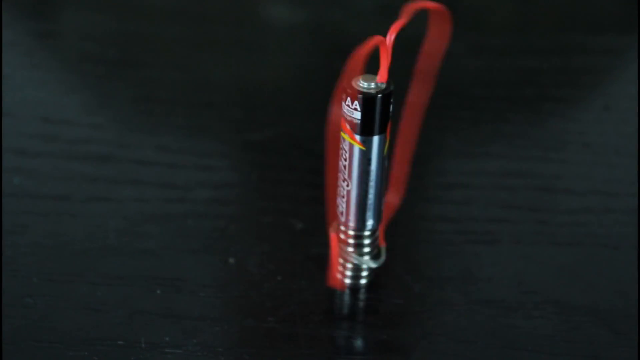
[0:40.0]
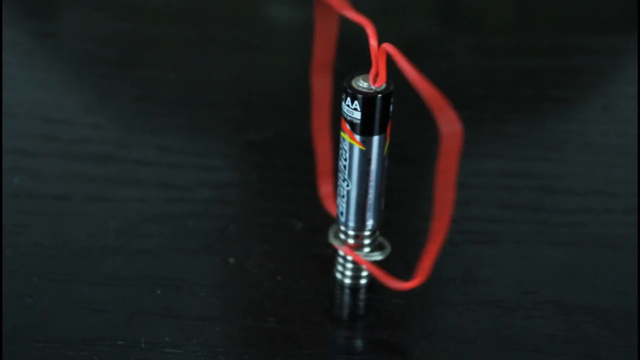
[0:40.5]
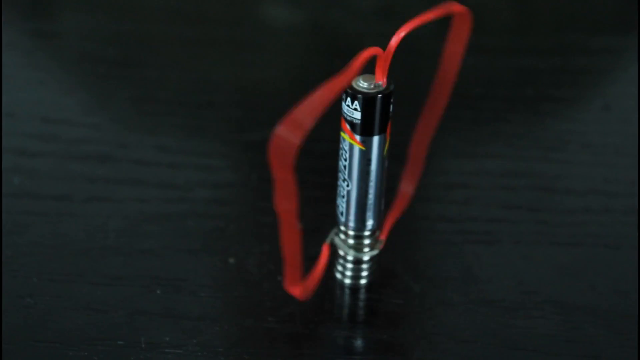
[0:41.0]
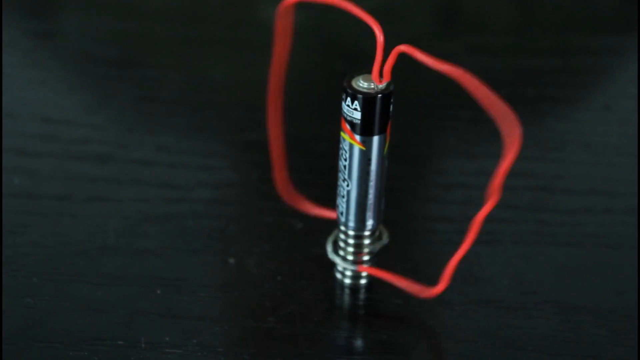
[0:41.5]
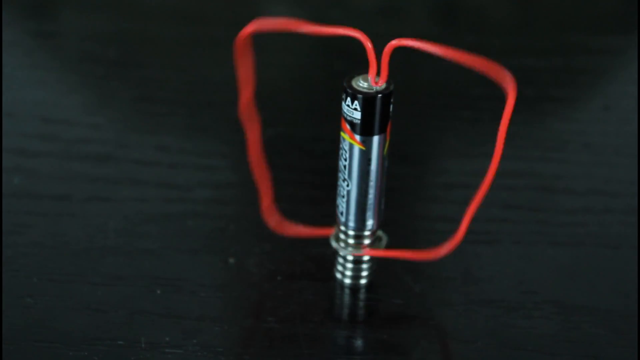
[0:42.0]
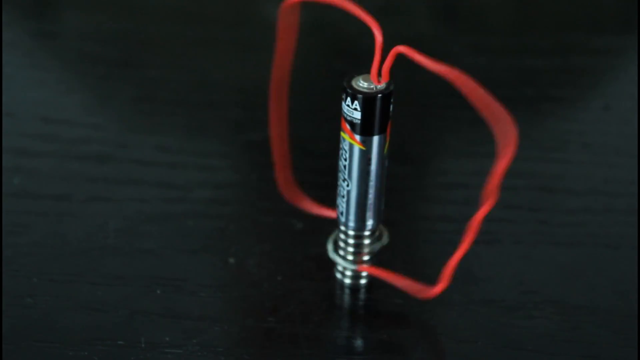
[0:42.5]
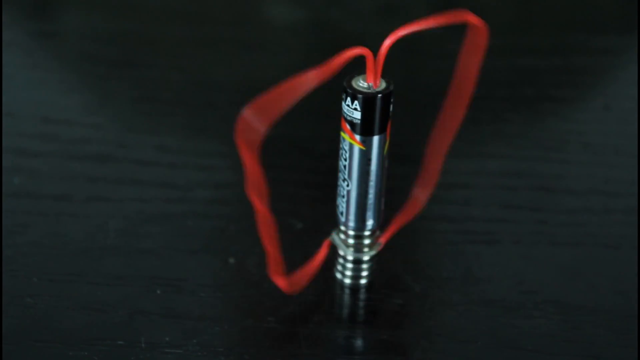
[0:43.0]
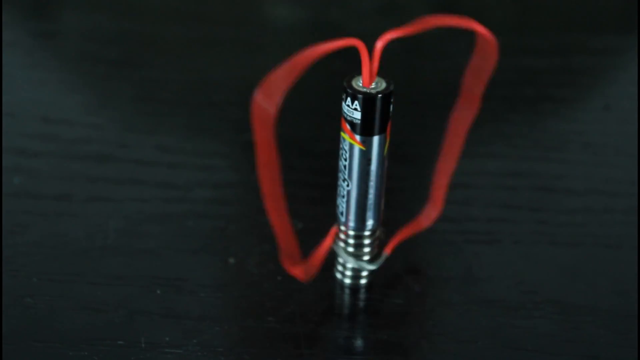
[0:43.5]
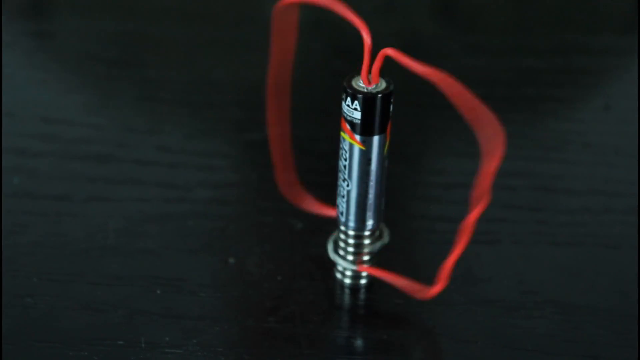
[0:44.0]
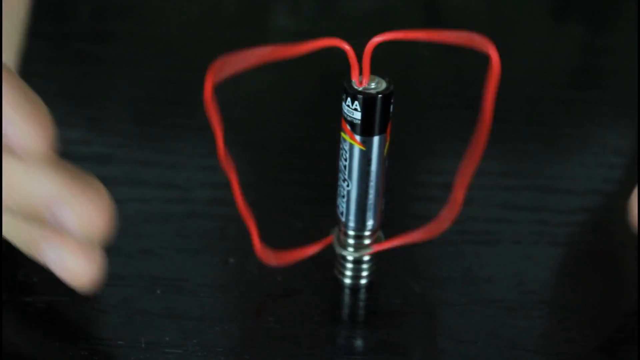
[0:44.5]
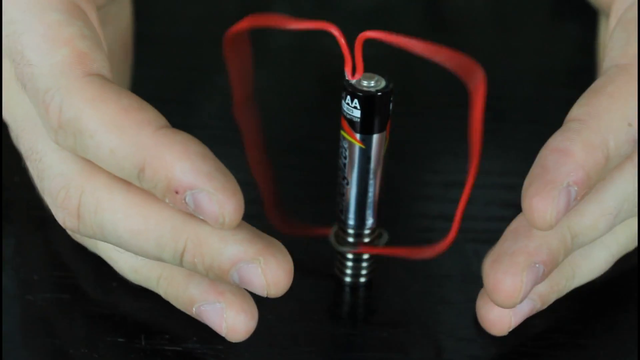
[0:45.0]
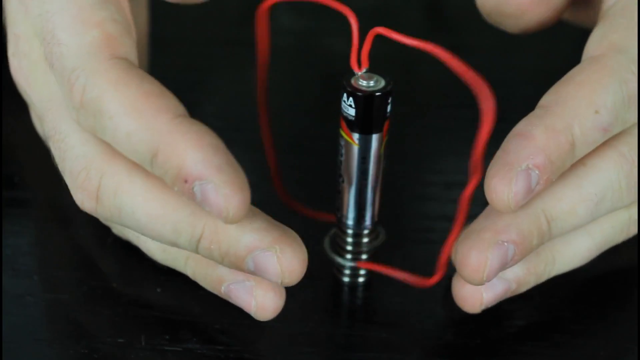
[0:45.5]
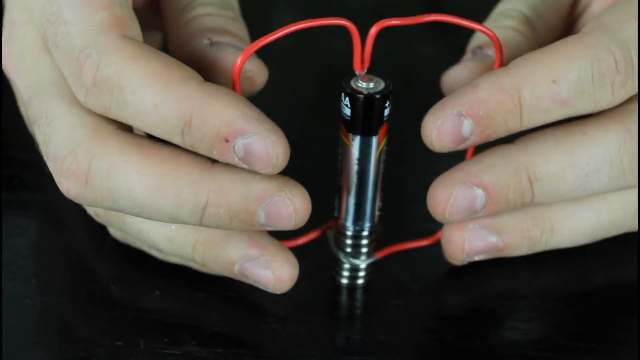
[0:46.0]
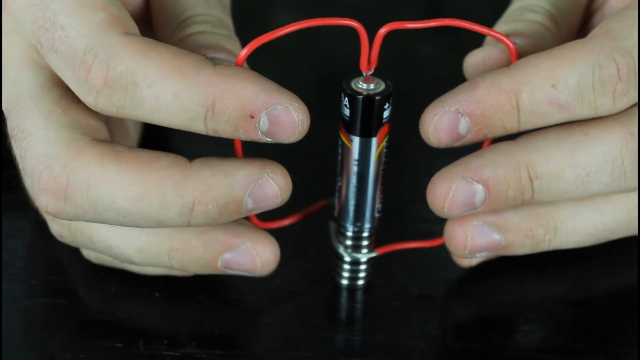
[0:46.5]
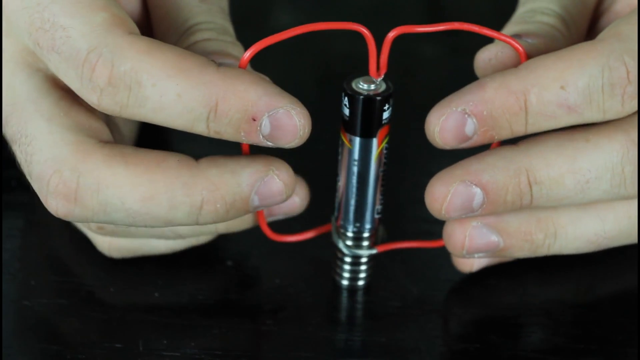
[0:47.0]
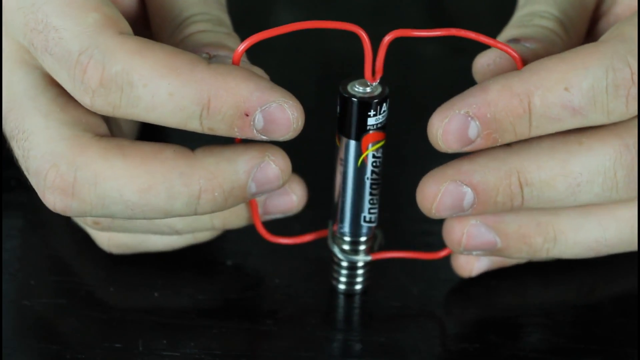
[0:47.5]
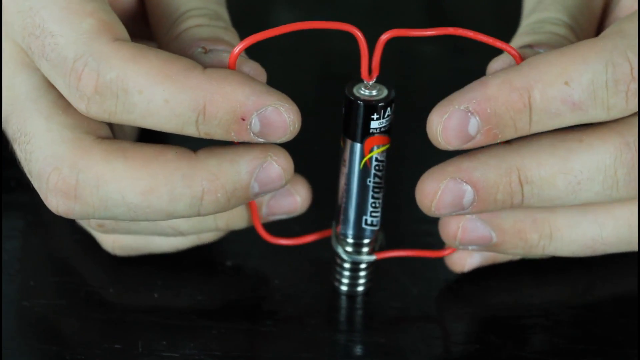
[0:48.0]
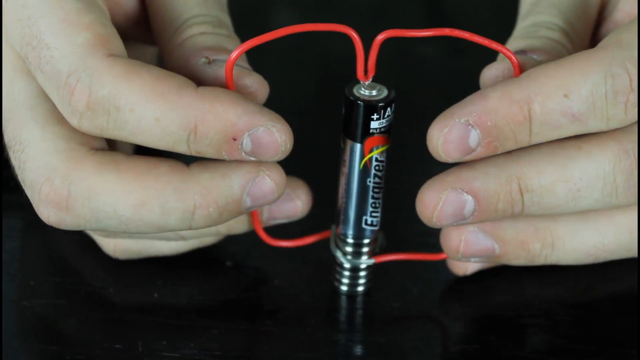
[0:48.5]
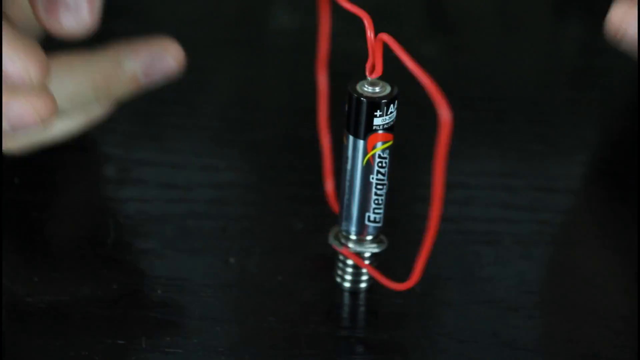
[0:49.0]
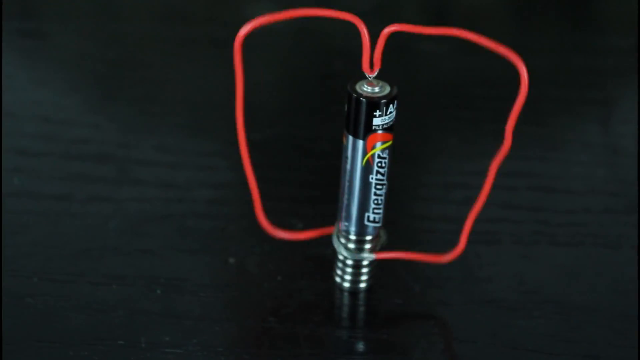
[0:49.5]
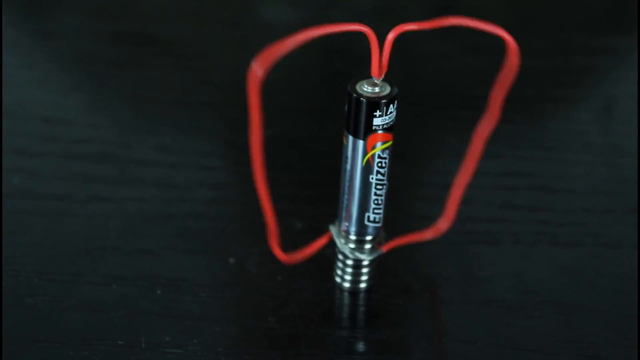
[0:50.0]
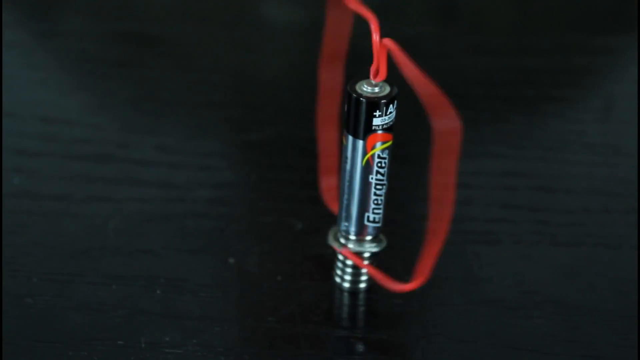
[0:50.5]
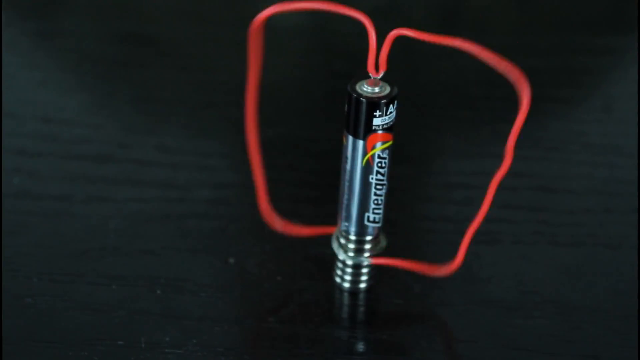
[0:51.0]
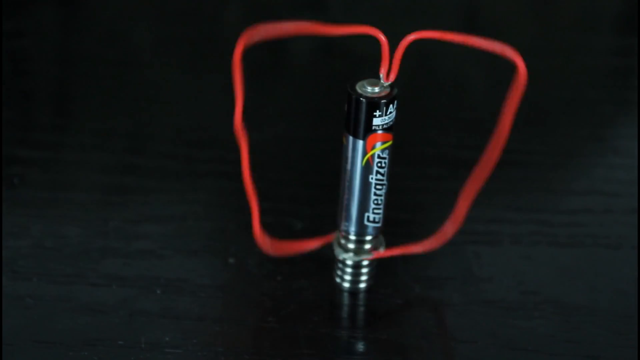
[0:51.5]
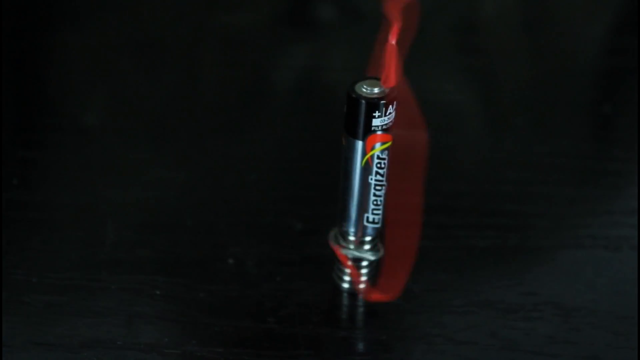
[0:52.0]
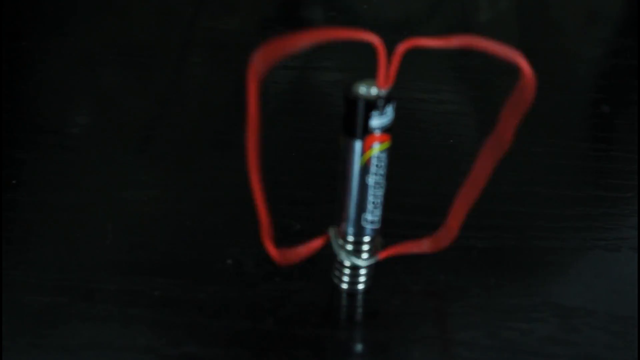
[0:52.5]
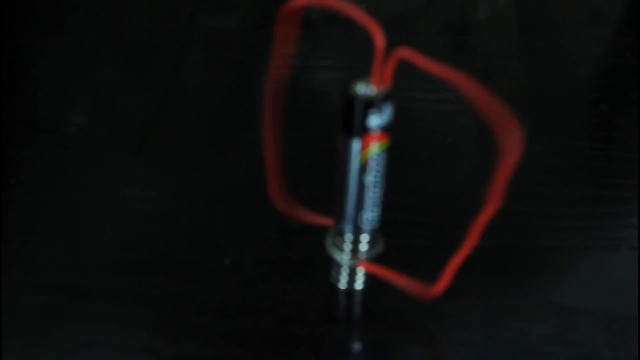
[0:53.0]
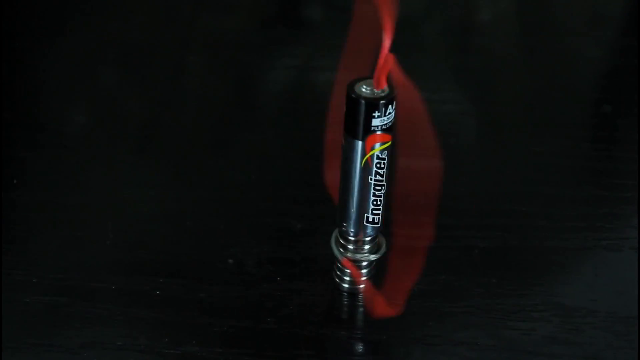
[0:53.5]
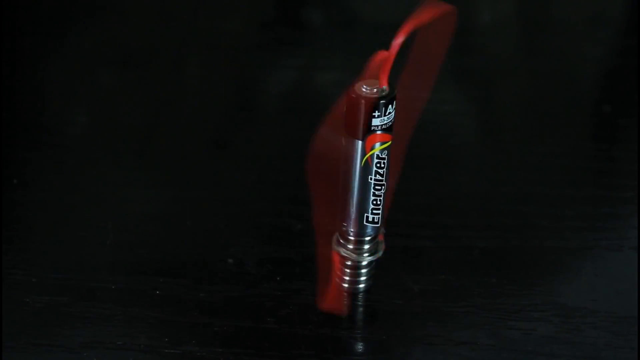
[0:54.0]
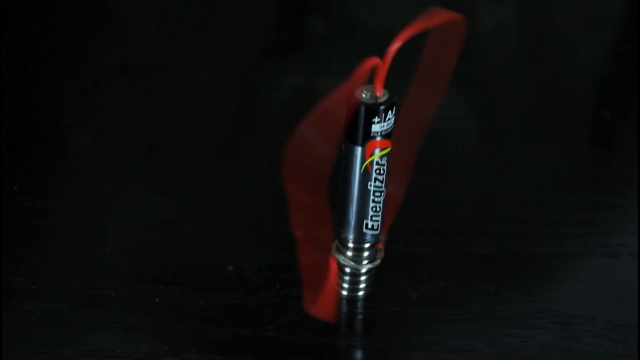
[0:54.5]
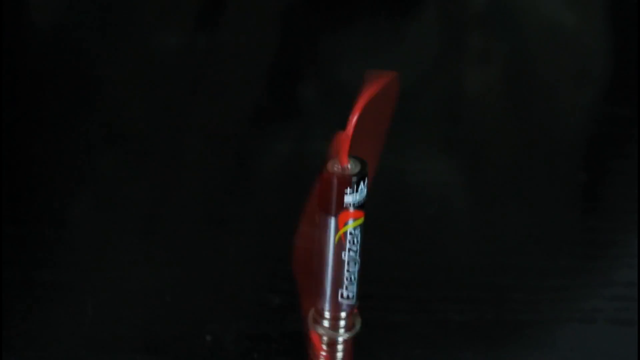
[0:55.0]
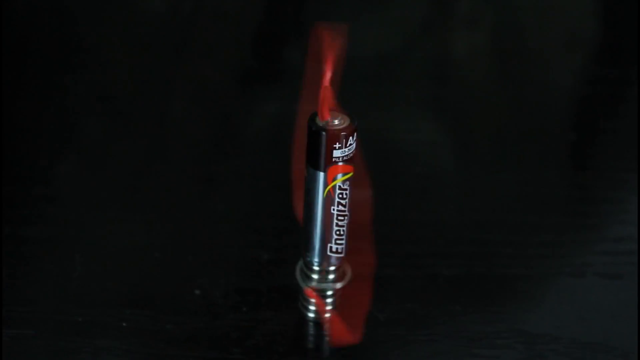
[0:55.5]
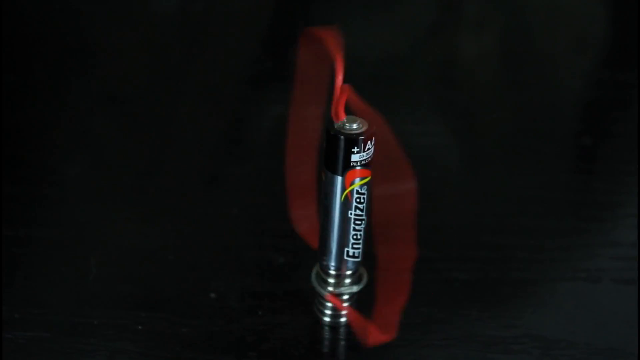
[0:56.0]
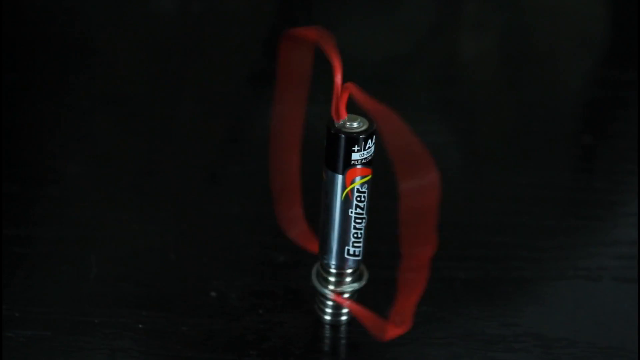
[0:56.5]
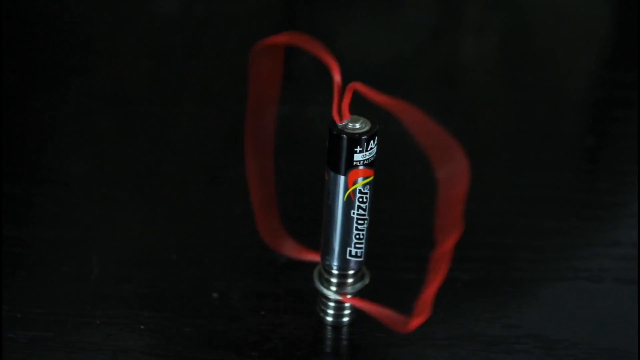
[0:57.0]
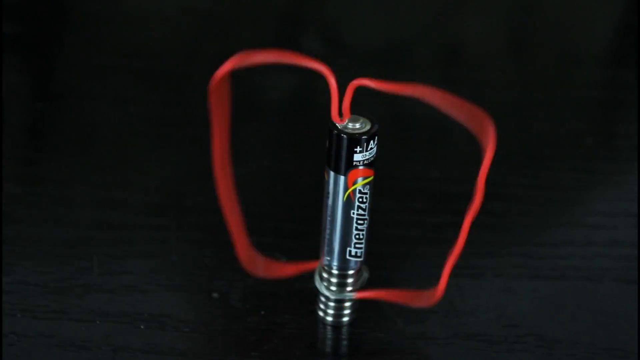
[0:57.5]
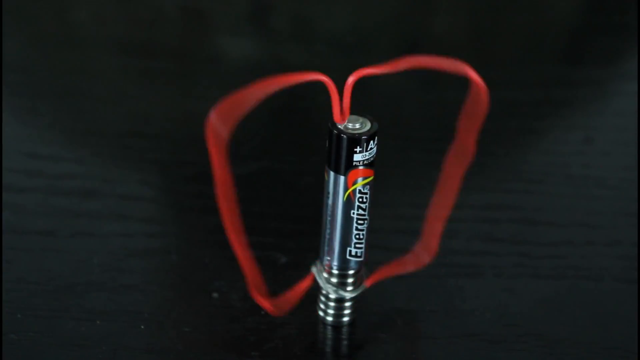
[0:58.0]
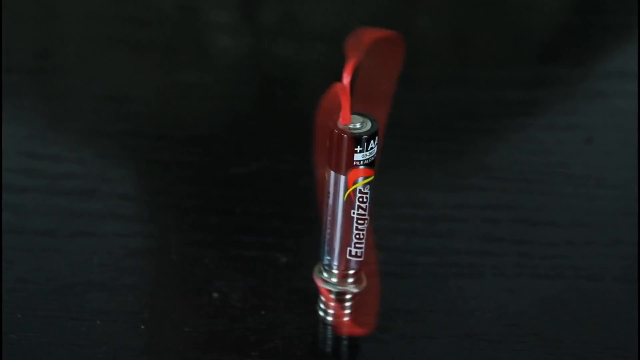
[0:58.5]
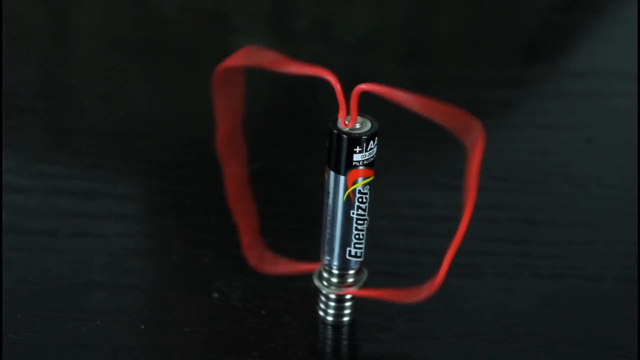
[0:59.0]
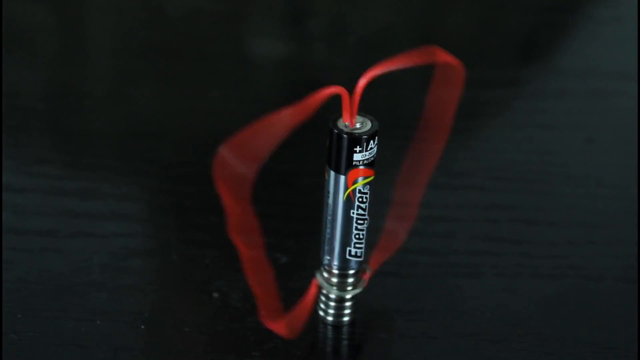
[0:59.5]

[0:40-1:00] The wire is still spinning, seemingly from right to left, wrapped around the bottom and the top. The part of the wire that dips downward rests on the very top of the battery as it spins. The man's hands come back into the frame from the upper left and upper right corners, and he appears to position the divot in the wire more directly on the raised part of the AA battery, the positive end, so that it starts spinning even faster. The background still appears very dark; the silhouette of the man's shoulders and the top of his head can kind of be seen, along with some swirls, so the surface could be a black wooden desk. The Energizer branding is visible along the left side of the battery.